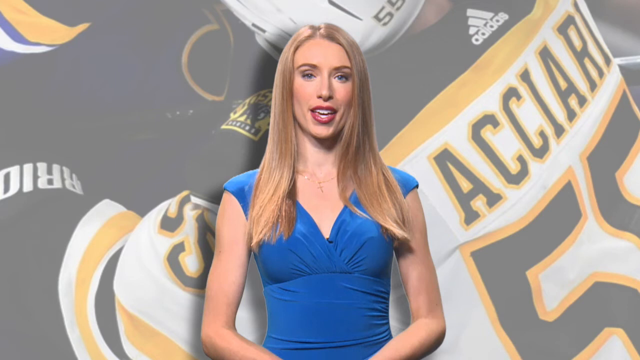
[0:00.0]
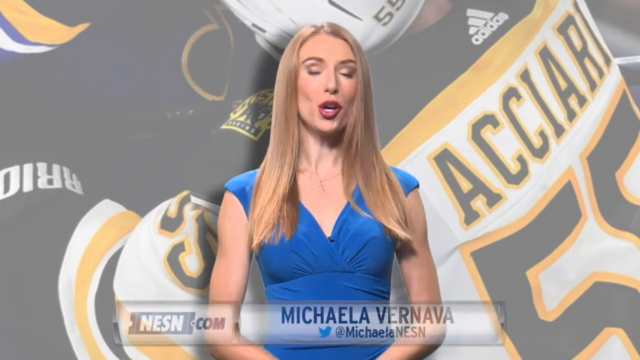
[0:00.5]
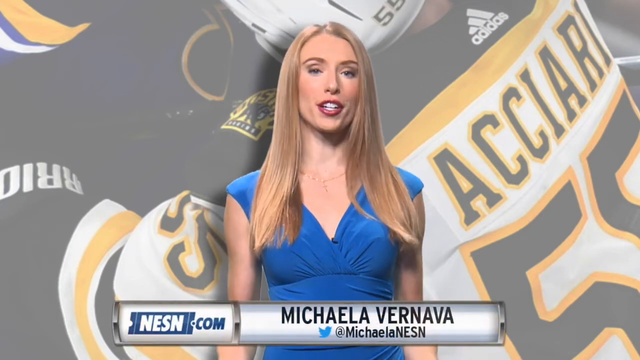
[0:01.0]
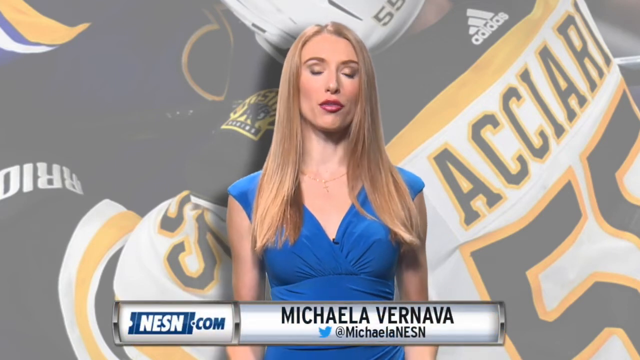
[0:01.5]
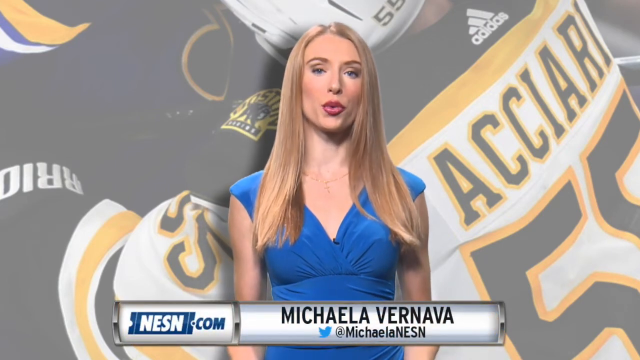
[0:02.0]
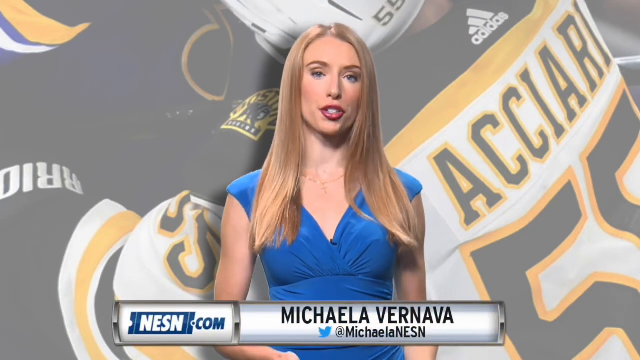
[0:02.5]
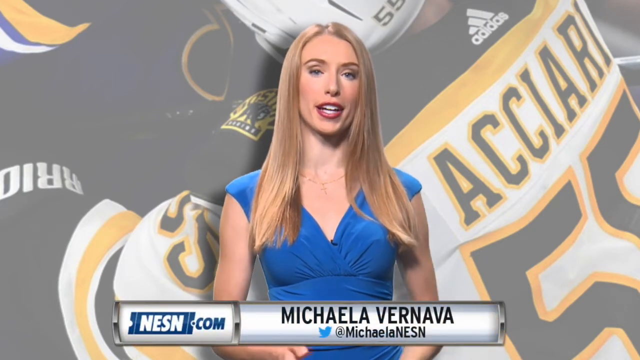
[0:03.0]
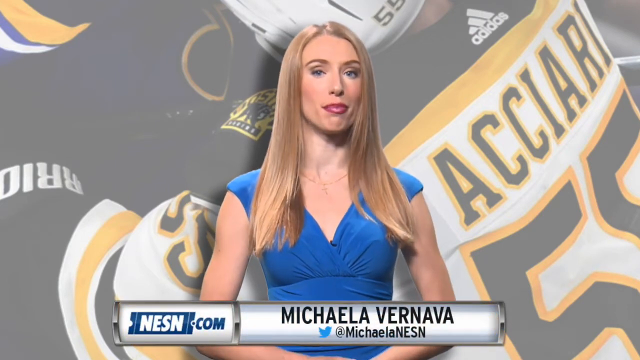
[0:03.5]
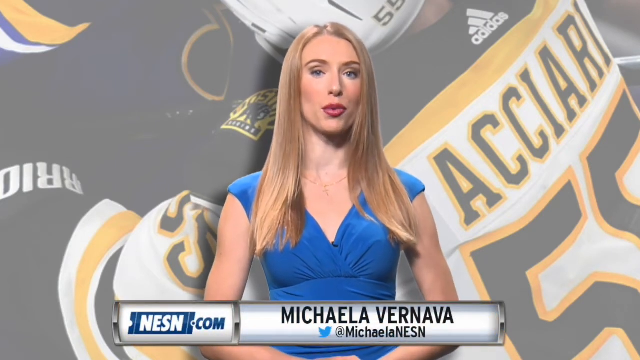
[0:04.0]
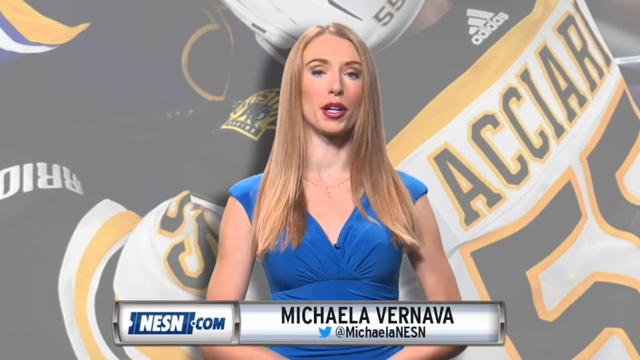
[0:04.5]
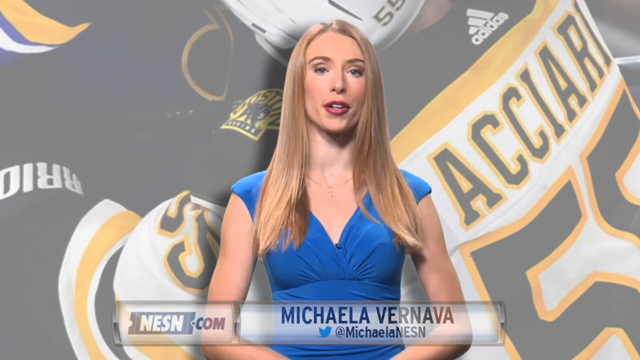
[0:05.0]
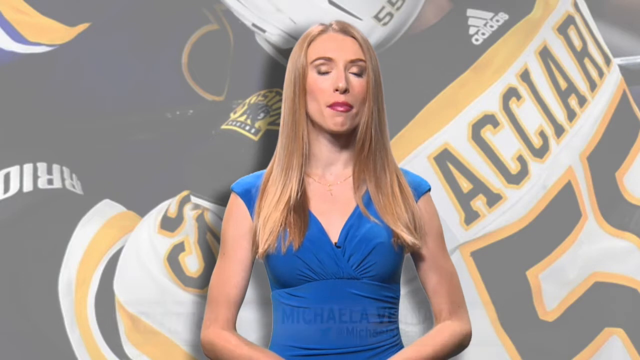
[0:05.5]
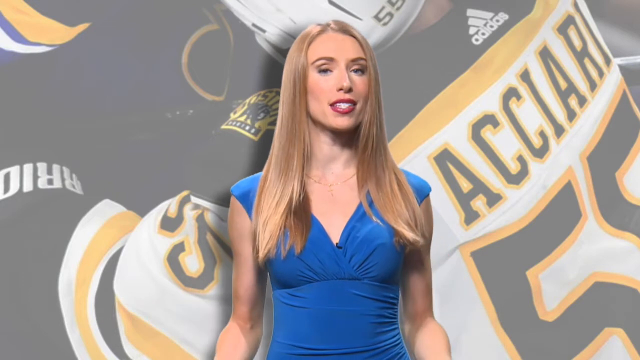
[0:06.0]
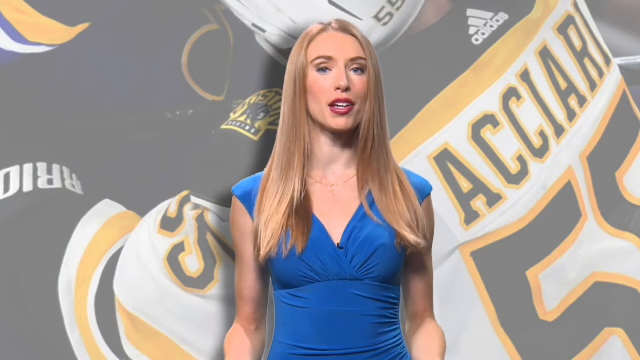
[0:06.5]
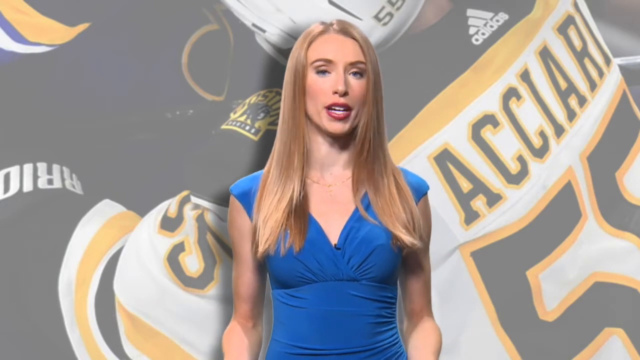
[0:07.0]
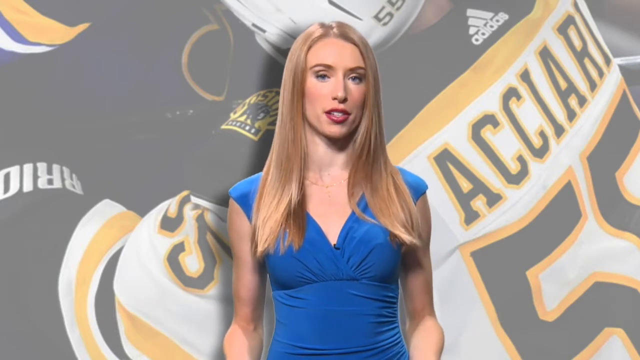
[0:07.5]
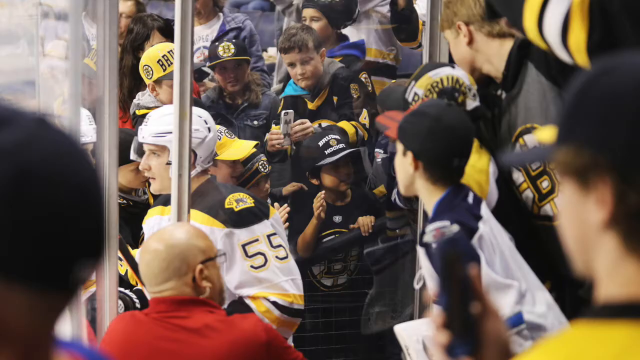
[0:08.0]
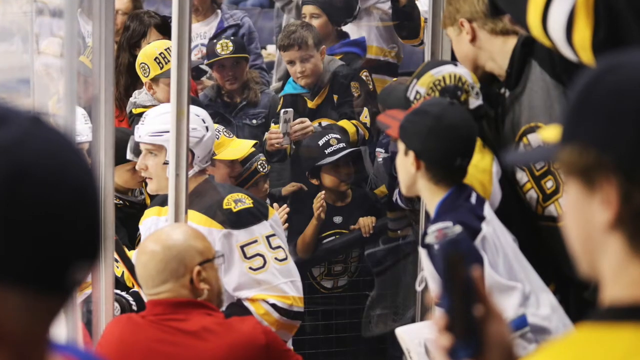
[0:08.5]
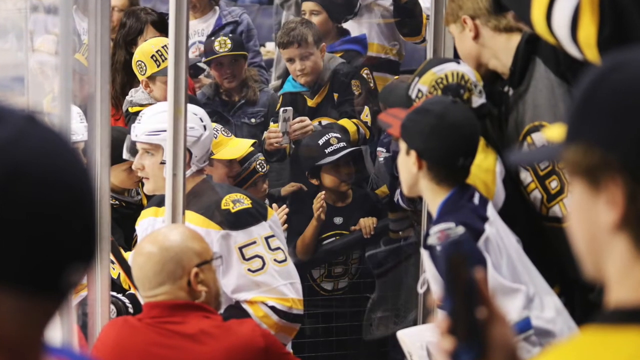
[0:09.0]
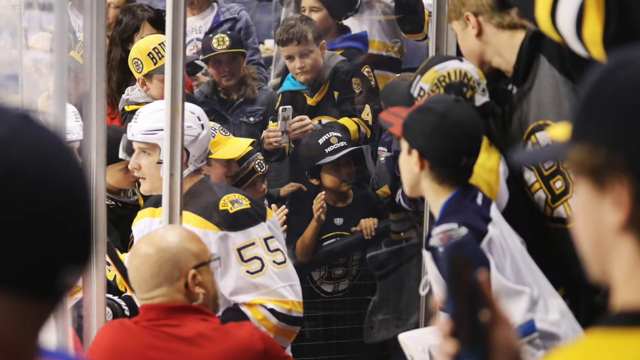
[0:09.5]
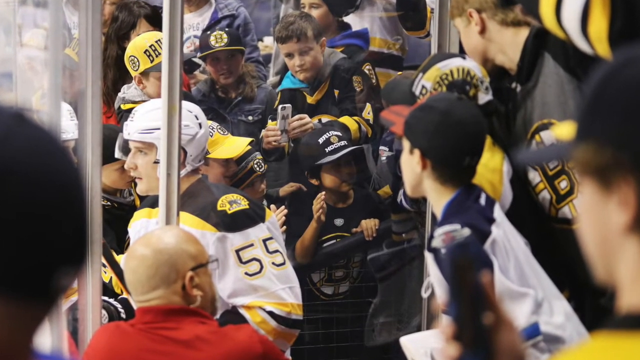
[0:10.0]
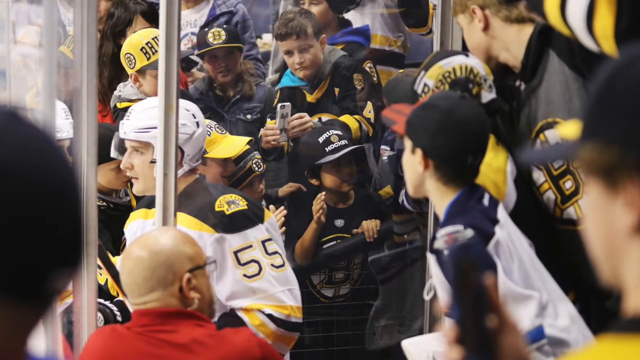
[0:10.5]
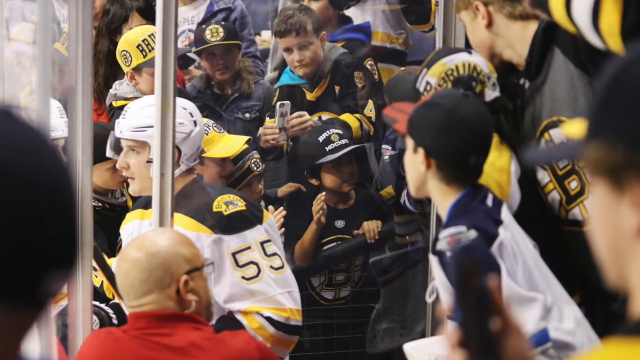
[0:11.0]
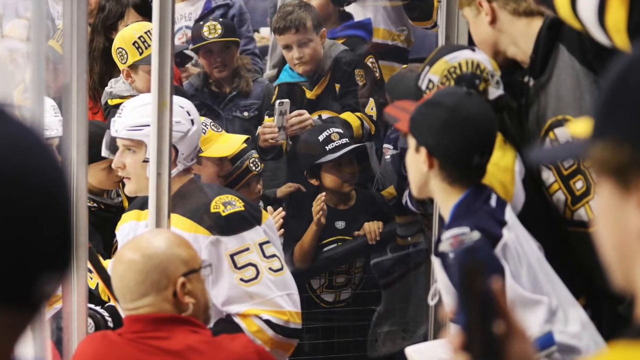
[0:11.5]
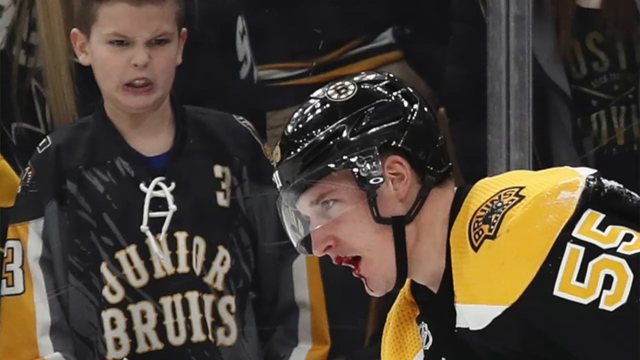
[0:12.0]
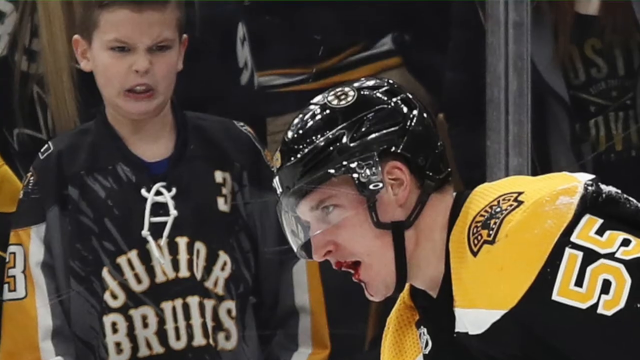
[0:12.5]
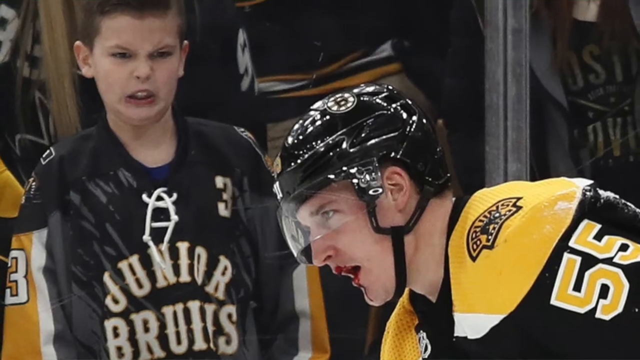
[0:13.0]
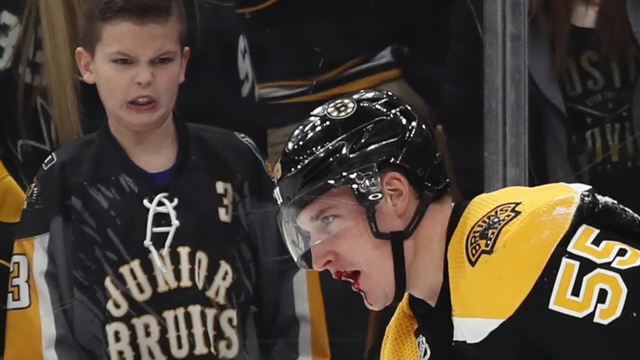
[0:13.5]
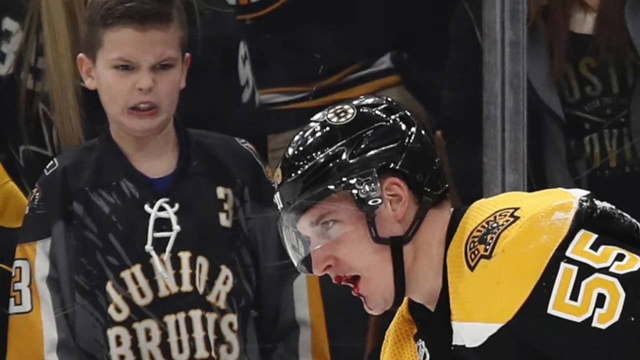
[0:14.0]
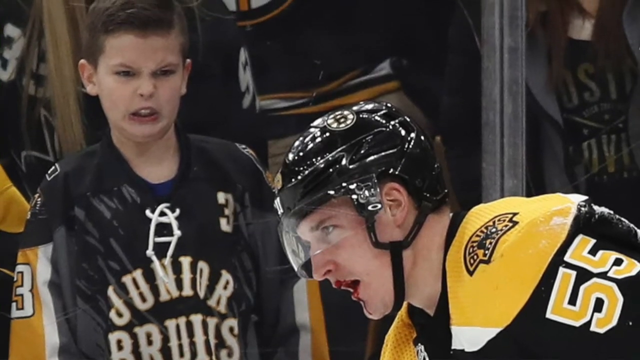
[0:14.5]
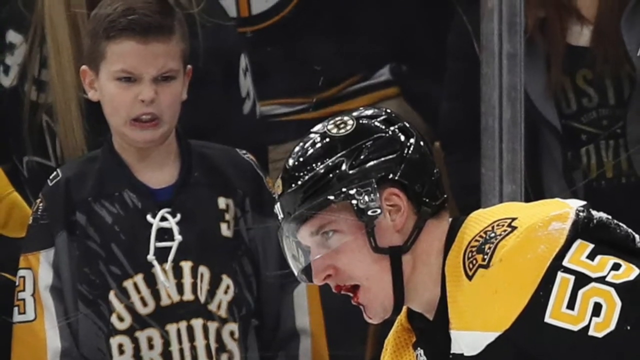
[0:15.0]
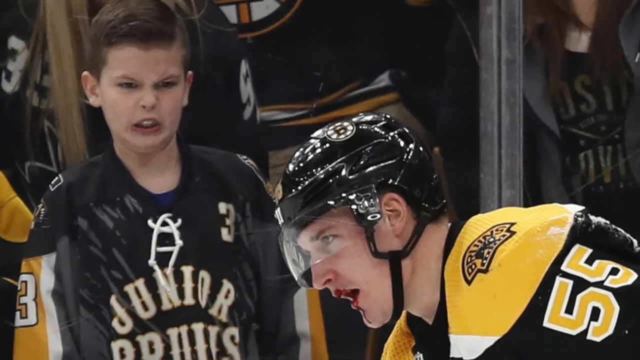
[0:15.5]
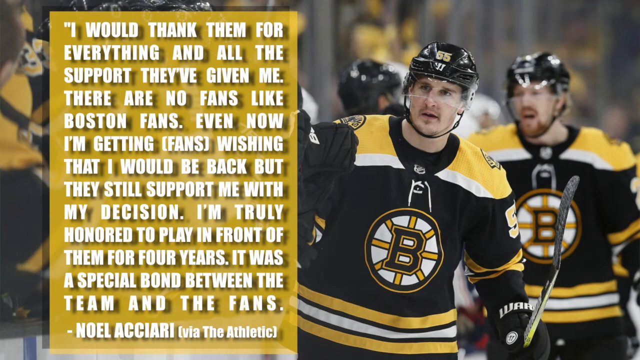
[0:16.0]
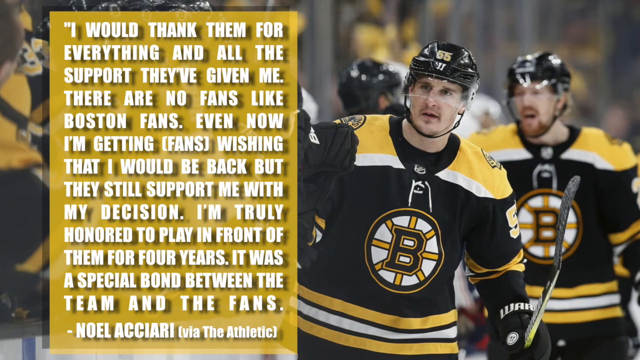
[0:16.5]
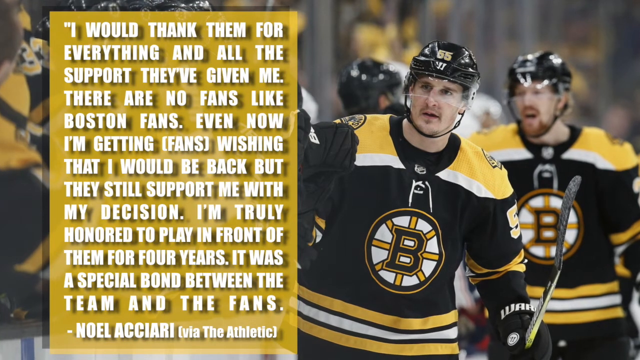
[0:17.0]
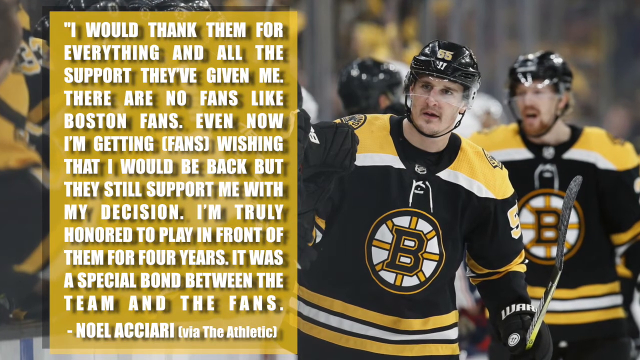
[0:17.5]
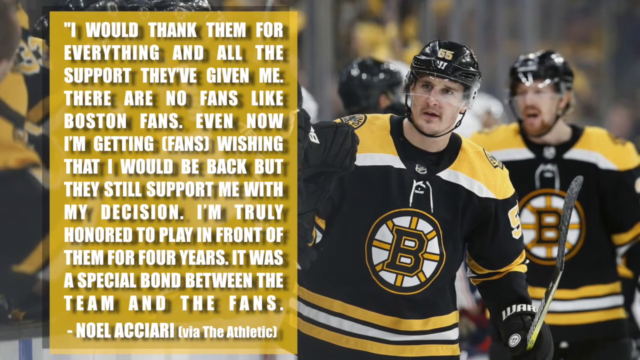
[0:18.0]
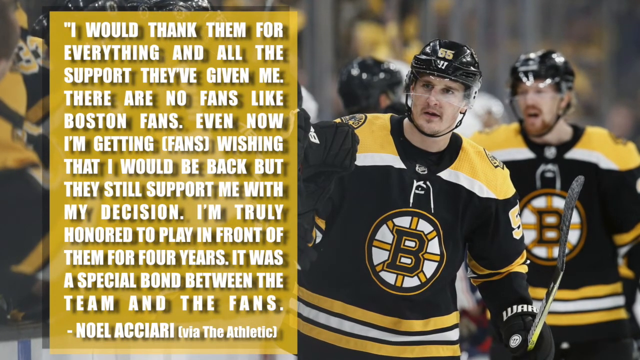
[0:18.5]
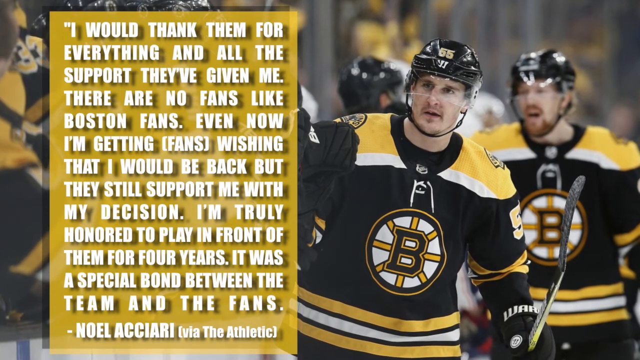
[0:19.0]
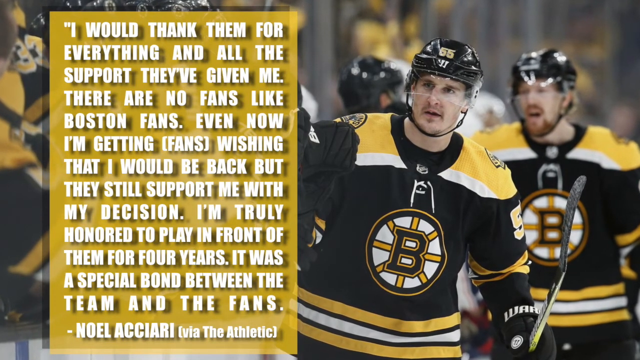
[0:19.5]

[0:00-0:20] The video opens with a woman named Mikayla Vernava speaking, with her Twitter account shown below her reading "at MikaylaNESN." A logo beneath her indicates she is speaking on behalf of the website NESN.com. The background behind her shows sports uniforms. She wears a blue dress and lipstick and has long blonde hair. She stands stationary in the middle and talks before the screen cuts to a group of sports fans and athletes standing closely clustered together. The athletes are hockey players wearing thick hockey pads, gear and helmets. Next comes an image of an injured hockey player, number 55, with a bleeding lip, who appears to be in pain, as a boy winces at the player's injuries. It then cuts to a quote by Noel Asiari via The Atlantic that reads: "I would like to thank them for everything and all the support they've given me. There are no fans like Boston fans. Even now I'm getting fans wishing that I would be back, but they still support me with my decision. I'm truly honored to play in front of them for four years. It was a special bond between the team and the fans."